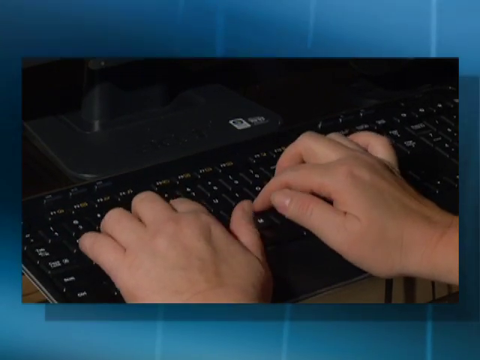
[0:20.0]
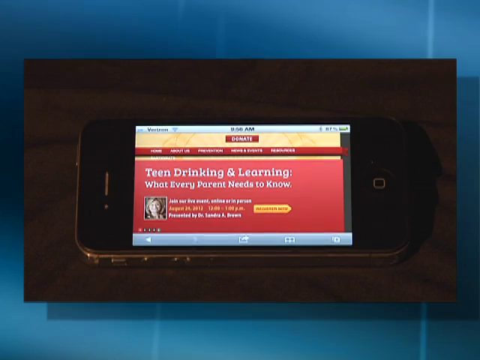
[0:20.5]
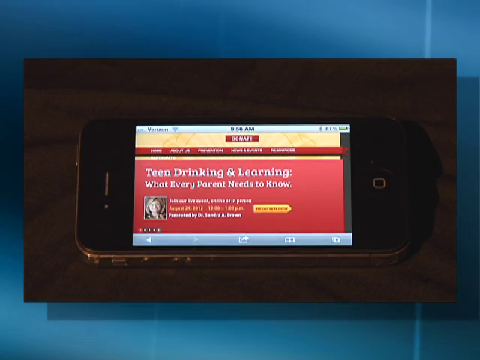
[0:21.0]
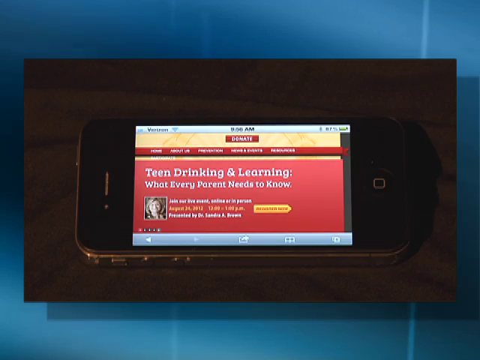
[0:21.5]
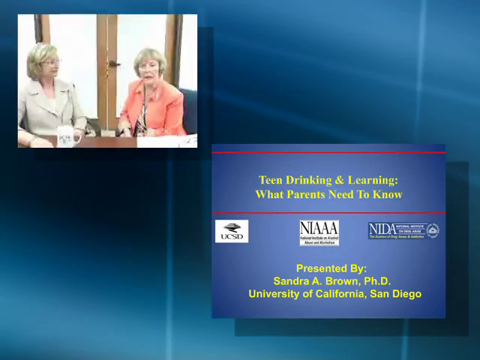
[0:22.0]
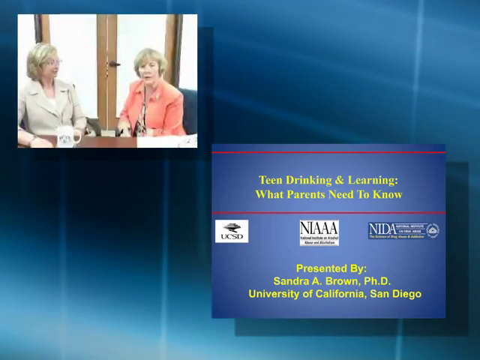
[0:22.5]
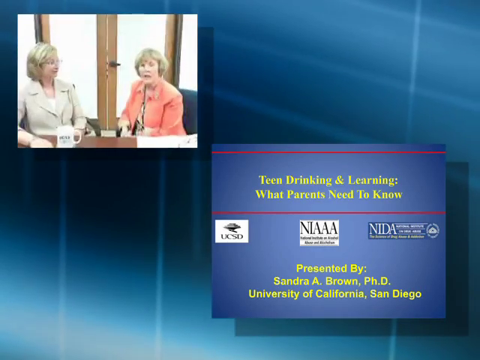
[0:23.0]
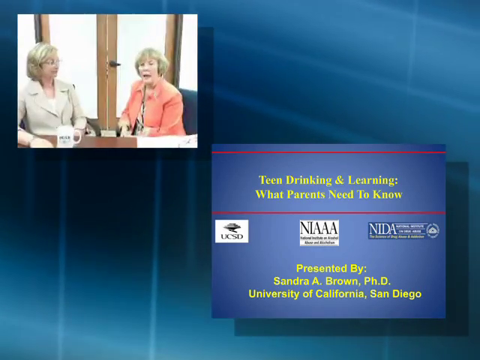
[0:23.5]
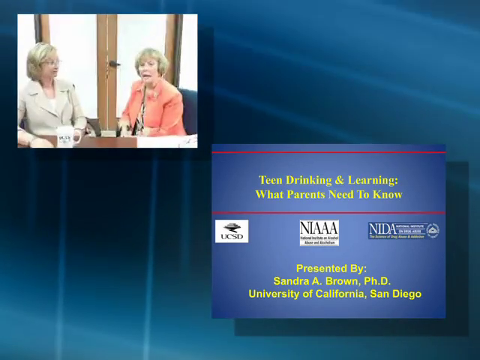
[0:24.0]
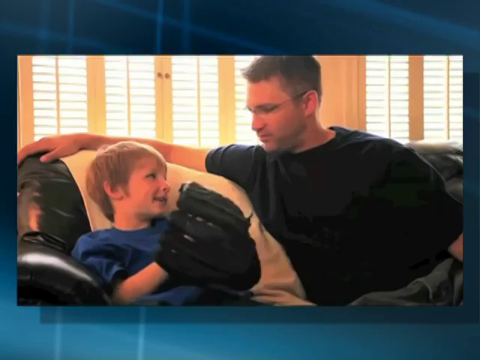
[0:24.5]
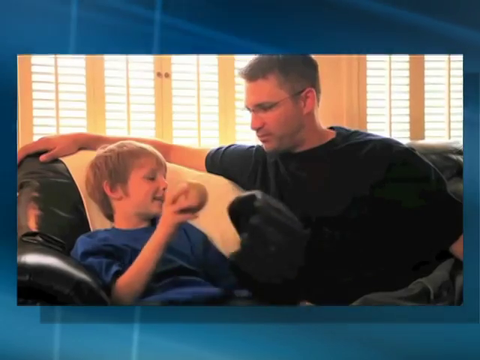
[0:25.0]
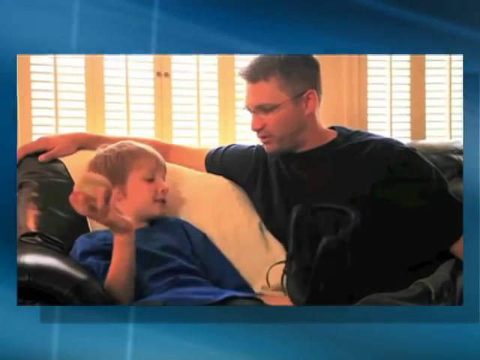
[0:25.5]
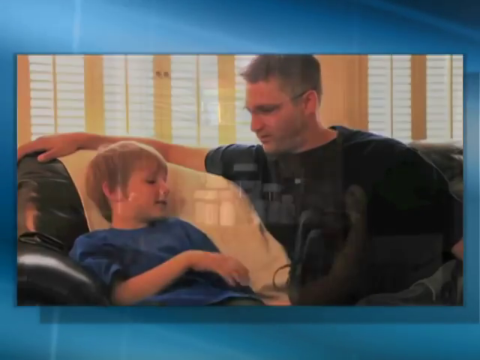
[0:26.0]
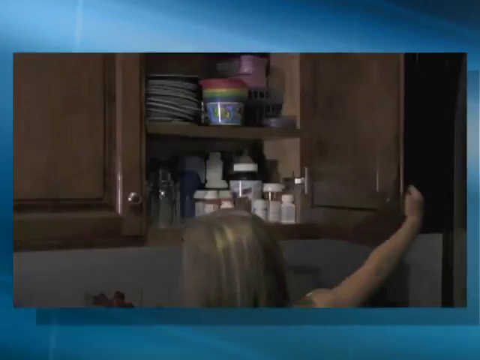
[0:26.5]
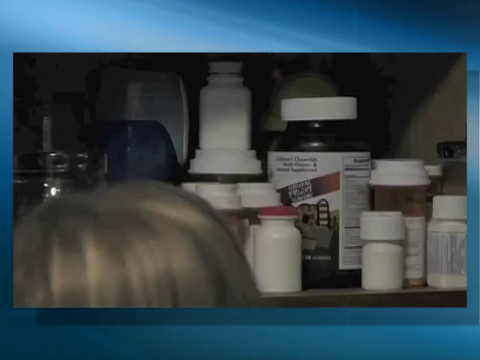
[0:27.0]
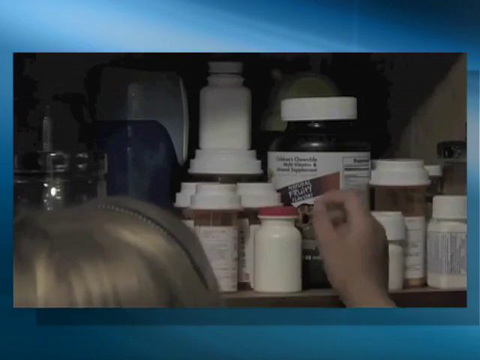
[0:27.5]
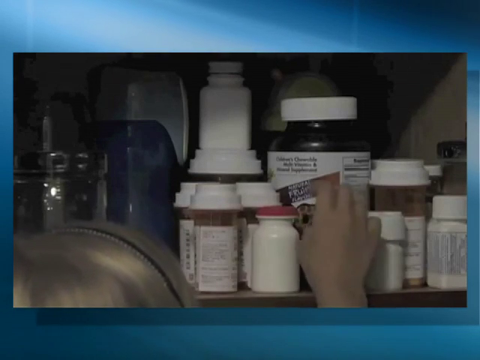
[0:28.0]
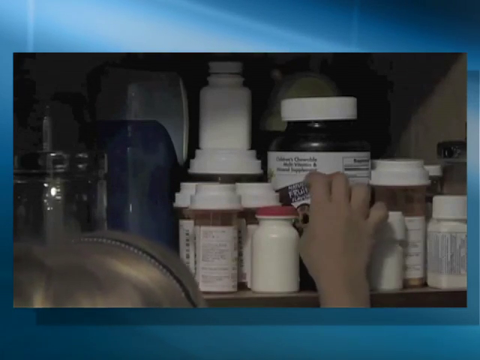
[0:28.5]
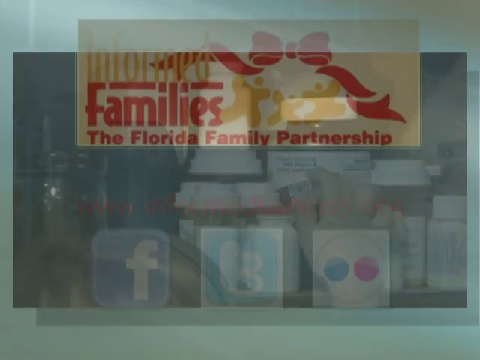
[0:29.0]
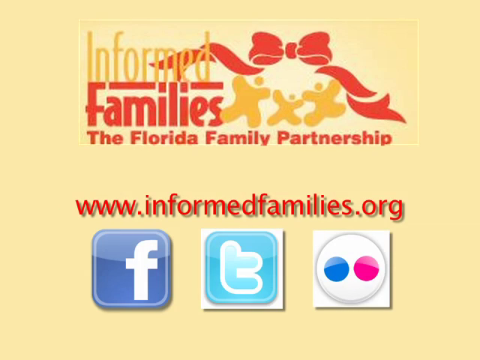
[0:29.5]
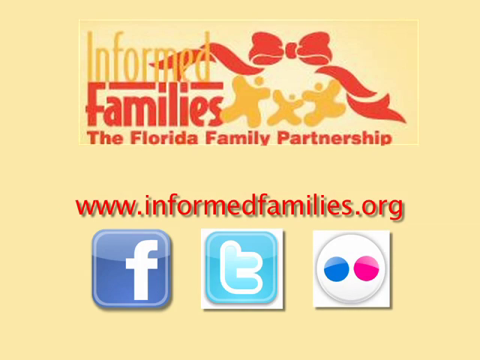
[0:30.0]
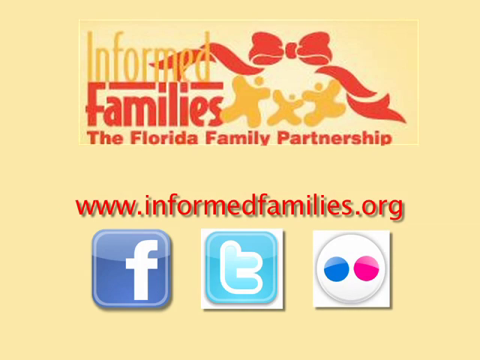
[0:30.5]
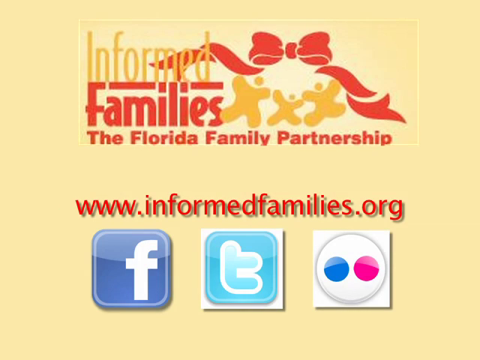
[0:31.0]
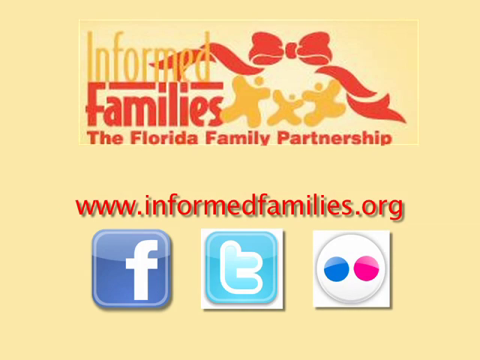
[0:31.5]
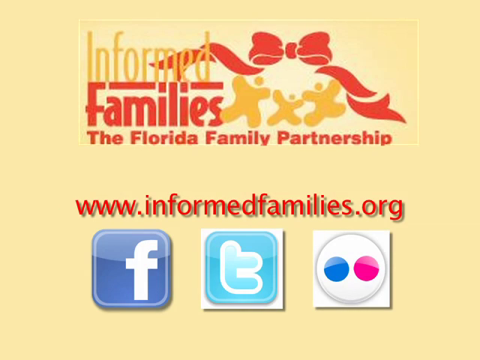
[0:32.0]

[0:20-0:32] The video concerns parents and family, with the topic teen drinking and learning, what every parent needs to know. The information is from Dr. Sandra A. Brown, University of California, Santiago, and concerns helping kids grow up safe, healthy and drug free.